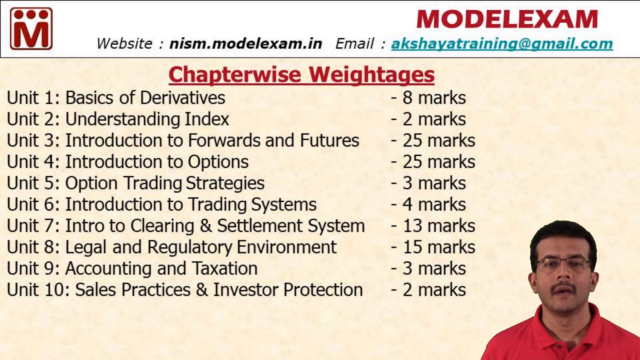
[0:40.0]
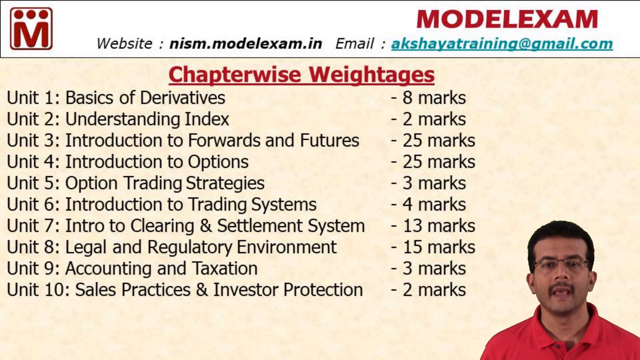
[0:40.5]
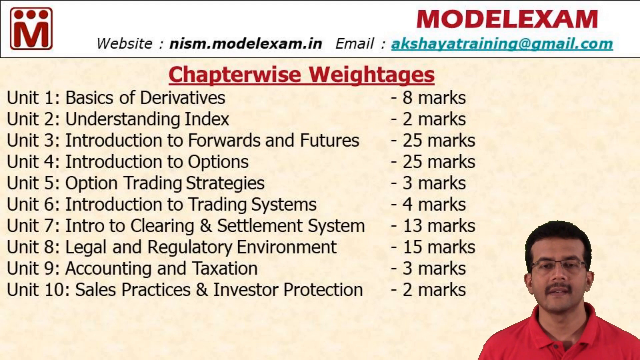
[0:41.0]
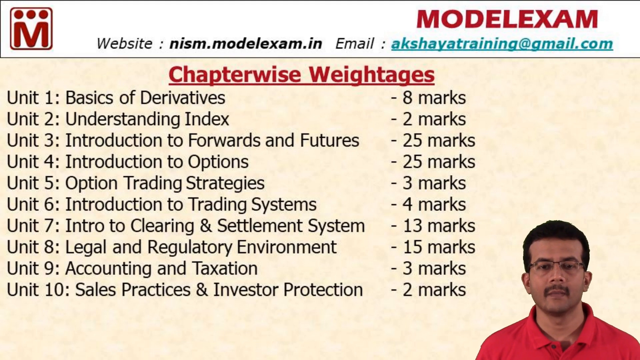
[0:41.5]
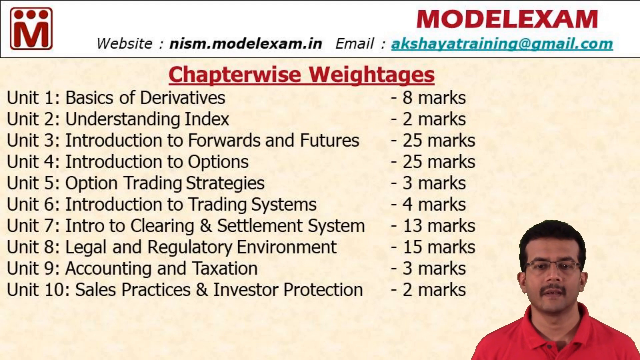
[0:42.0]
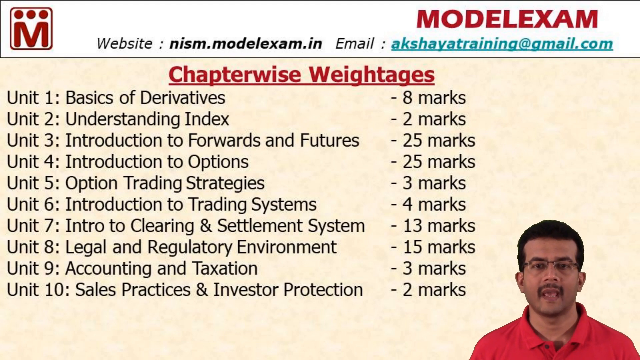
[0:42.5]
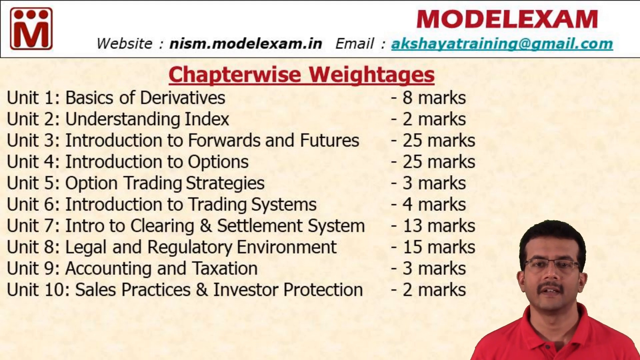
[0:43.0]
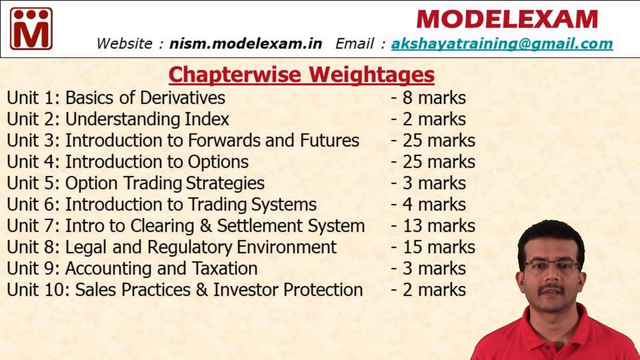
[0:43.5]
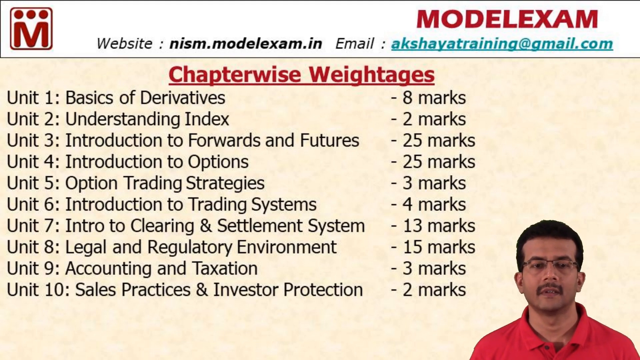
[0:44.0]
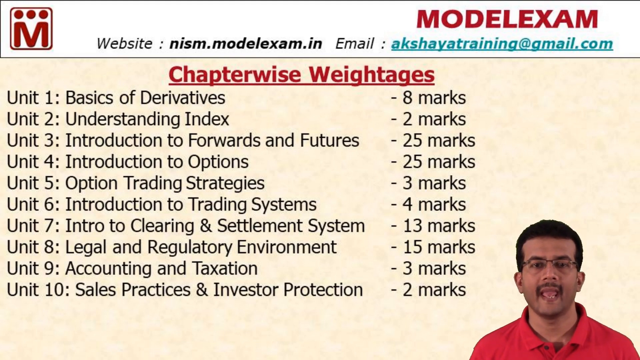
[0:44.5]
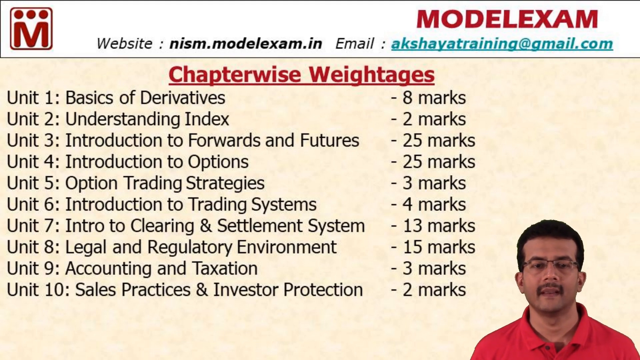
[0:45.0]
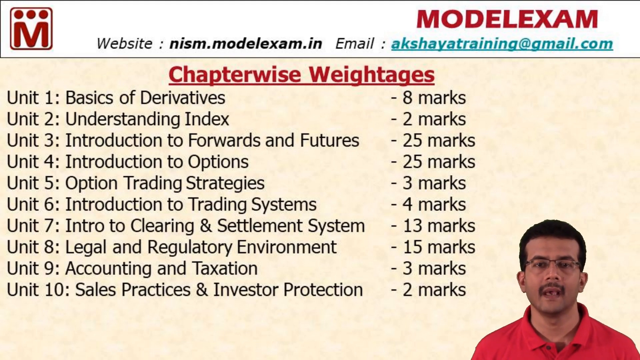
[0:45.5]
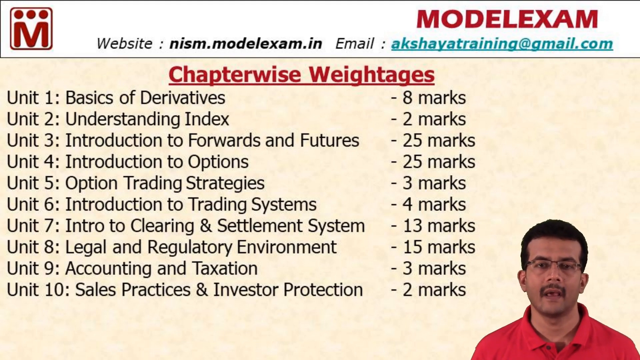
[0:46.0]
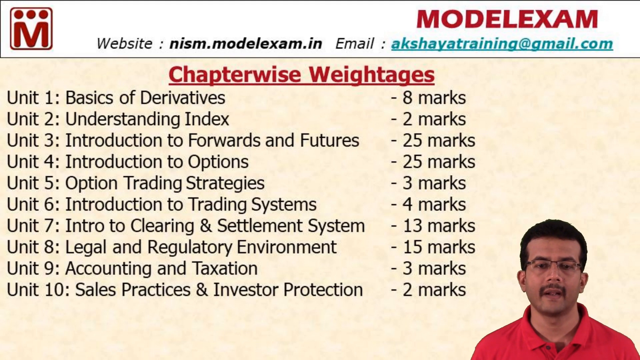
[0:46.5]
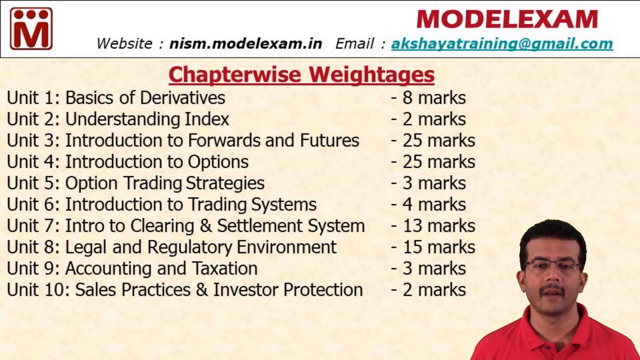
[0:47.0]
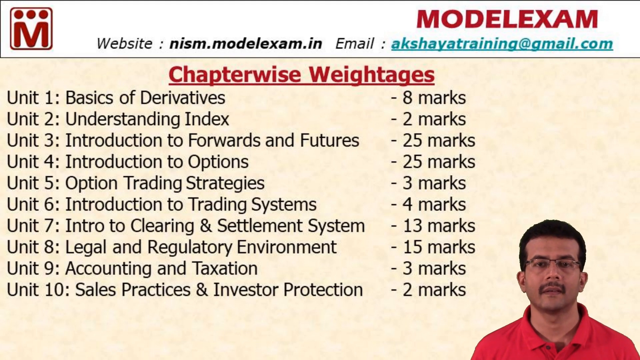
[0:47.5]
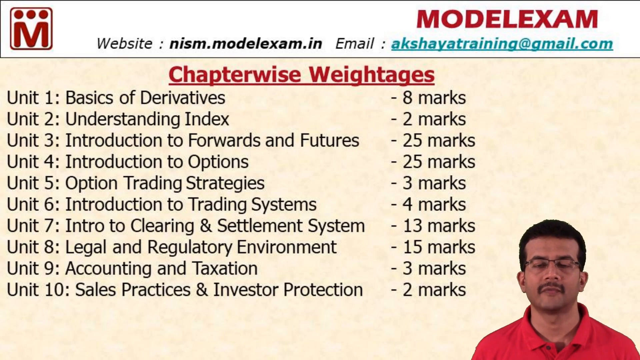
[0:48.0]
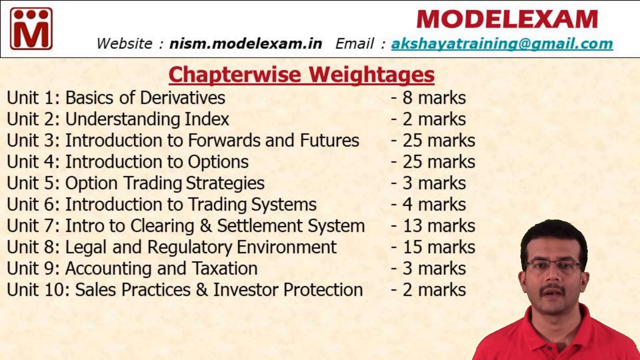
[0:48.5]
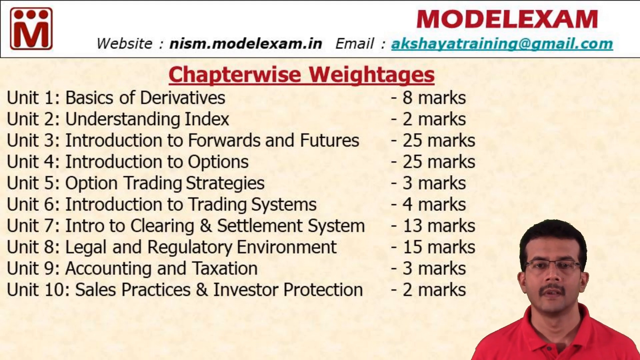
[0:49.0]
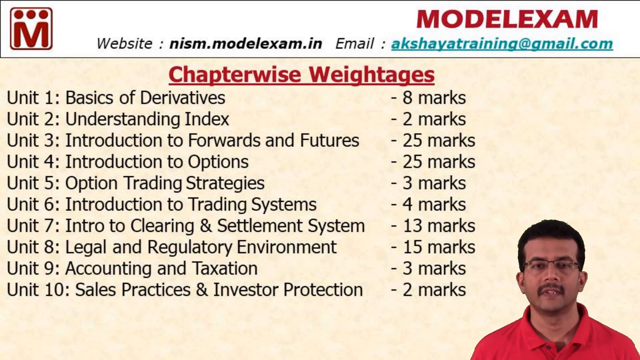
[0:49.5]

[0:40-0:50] The man is in the bottom right corner, visible from the shoulders up, wearing a red shirt that appears to have a folded-down collar. His glasses are mostly rectangular; there may be a very thin frame around them, or perhaps the frame only runs along the top of the lenses and not the bottom. He has dark, close-cropped hair and a mustache. He speaks to the camera, but his eyes move down as if he is reading off something in front of him, then move back up toward the camera. He speaks with a neutral expression.